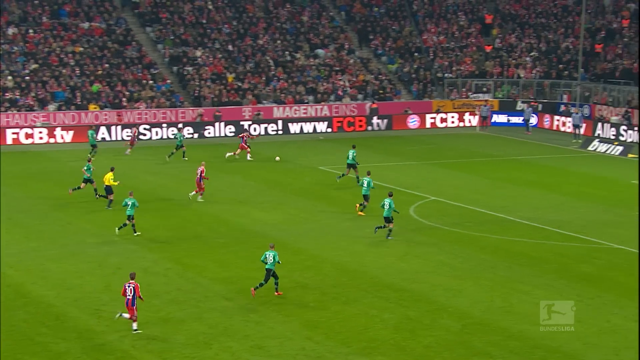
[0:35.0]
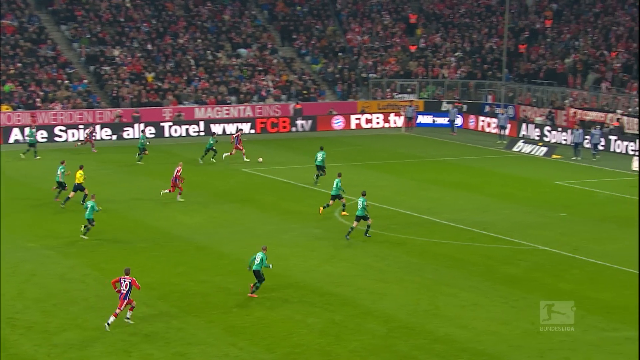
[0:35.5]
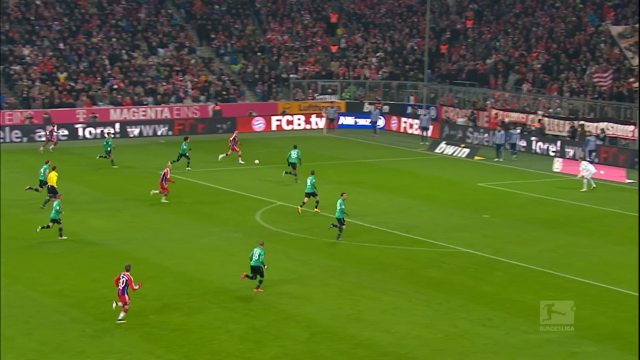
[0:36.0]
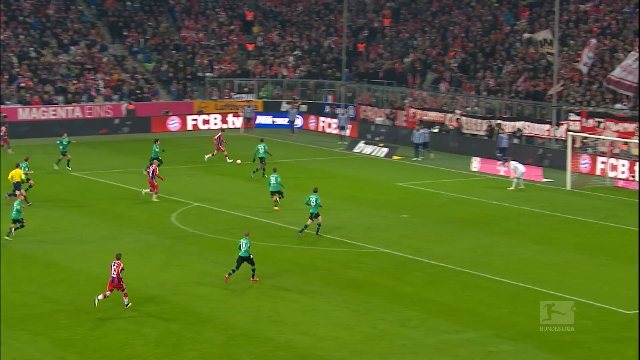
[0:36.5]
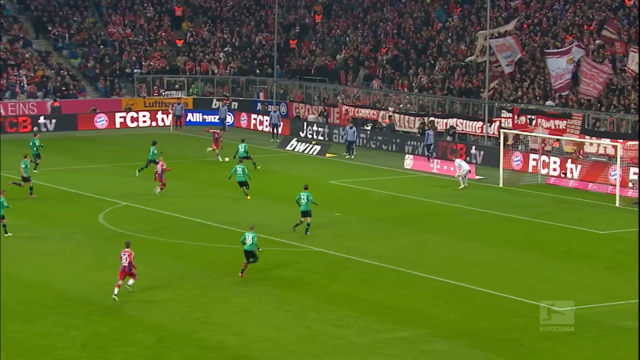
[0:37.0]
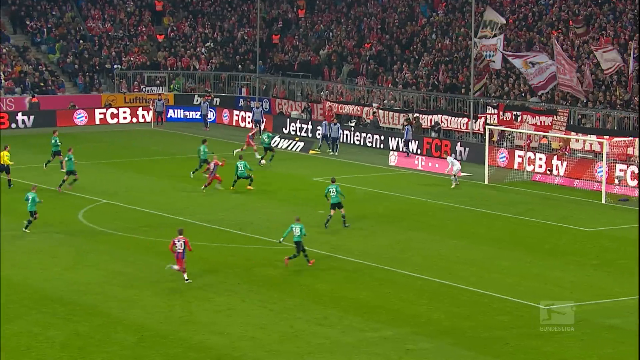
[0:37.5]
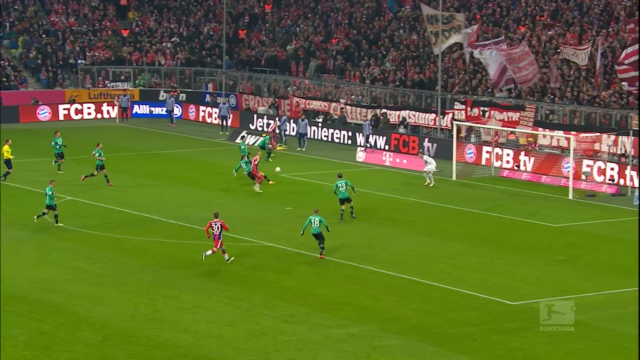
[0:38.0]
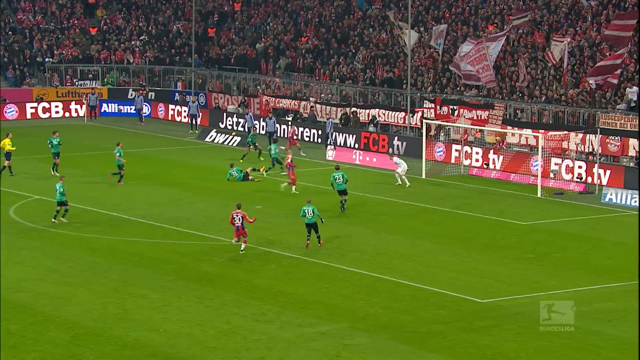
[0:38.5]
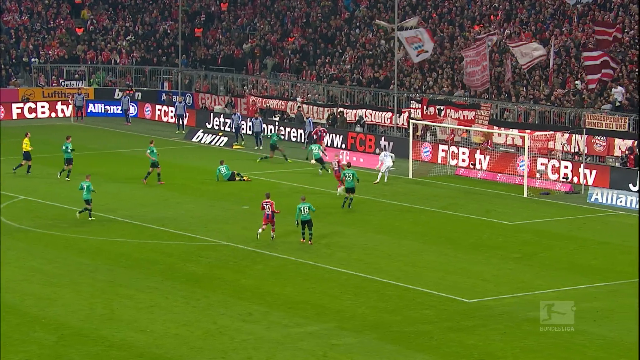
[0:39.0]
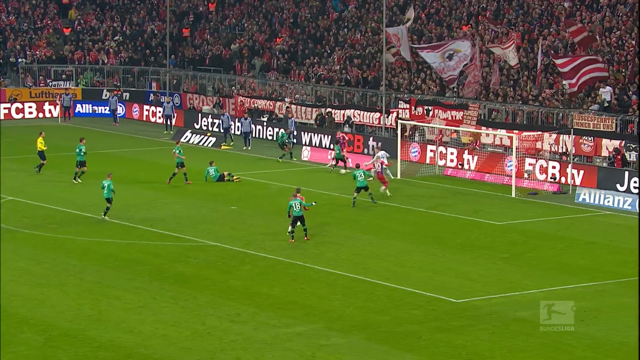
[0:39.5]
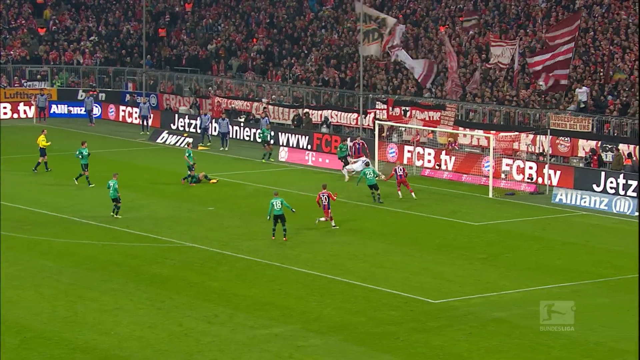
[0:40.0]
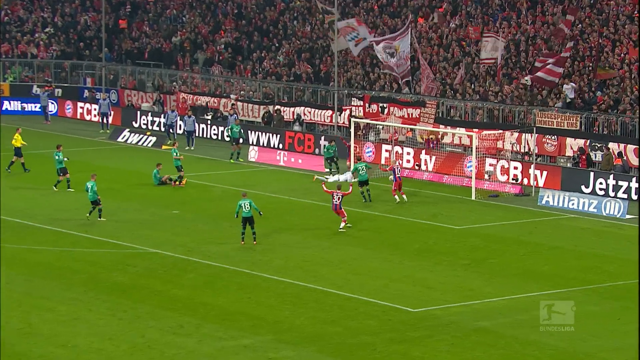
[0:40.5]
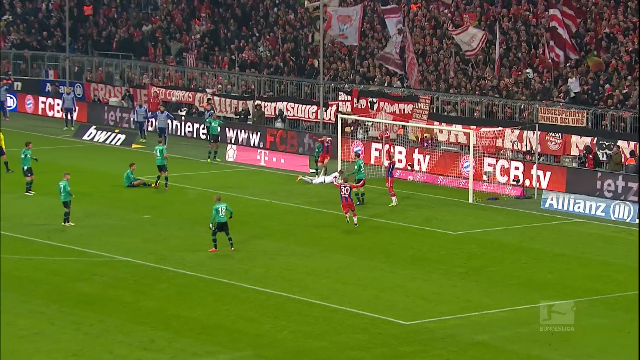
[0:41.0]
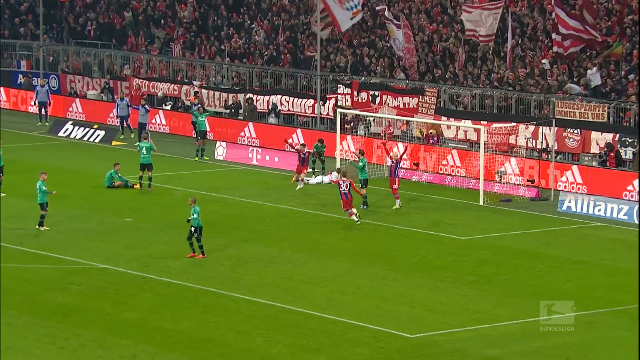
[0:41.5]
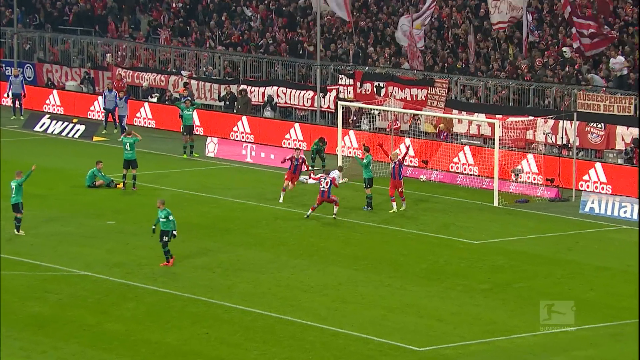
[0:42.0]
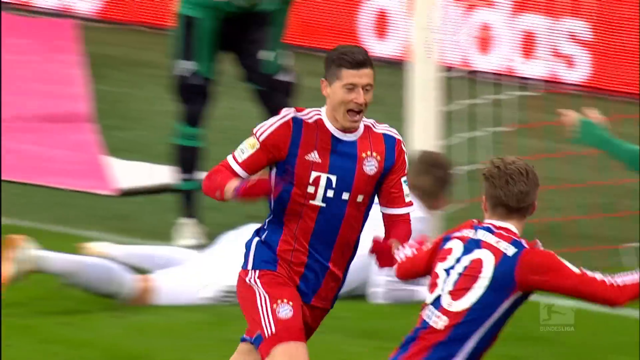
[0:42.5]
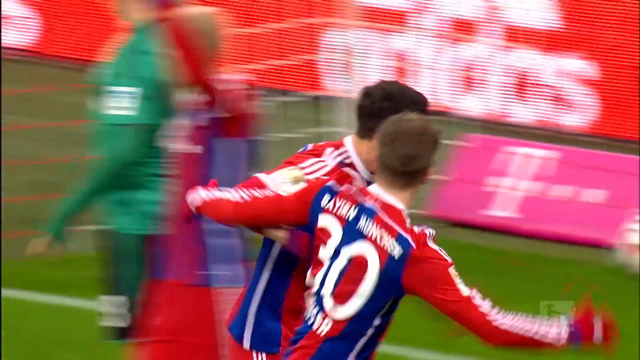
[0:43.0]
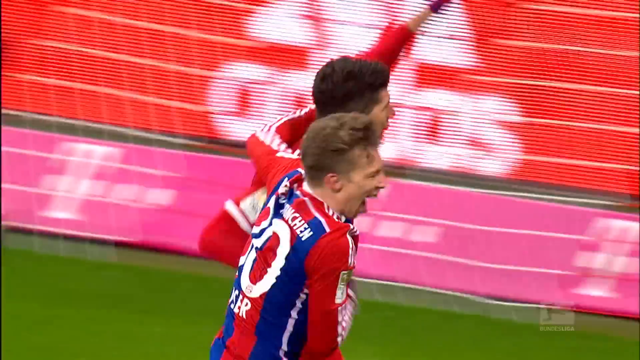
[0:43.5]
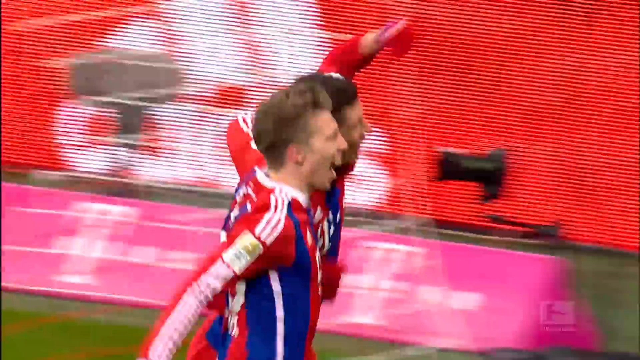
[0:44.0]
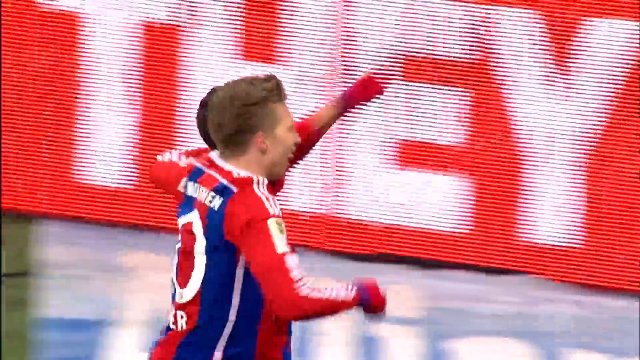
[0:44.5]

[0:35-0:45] Players are playing soccer on the field, and "sub now" appears in the bottom right of the screen. The large stadium has seating on all visible sides, and at its right end fans wave very large, oversized banners or flags in celebration. One team wears green tops and black shorts; the other wears red shirts and red shorts. Someone appears to have scored a goal, and the team in red celebrates. A close-up shows players in red whose tops have some blue markings; they appear to walk along together celebrating and run in an animated manner after scoring. They celebrate in front of an advertising section that at one point changes to show adidas all across it; the brightly lit signage reads "CBTV" and then "Adidas".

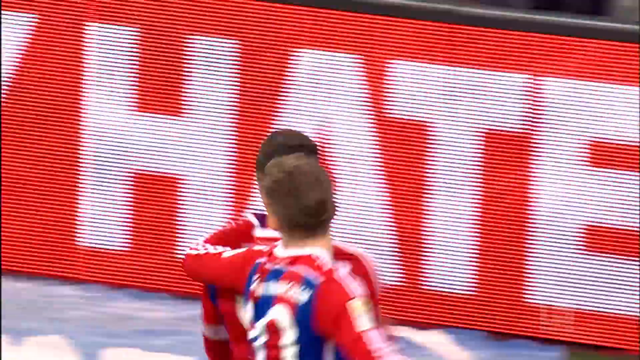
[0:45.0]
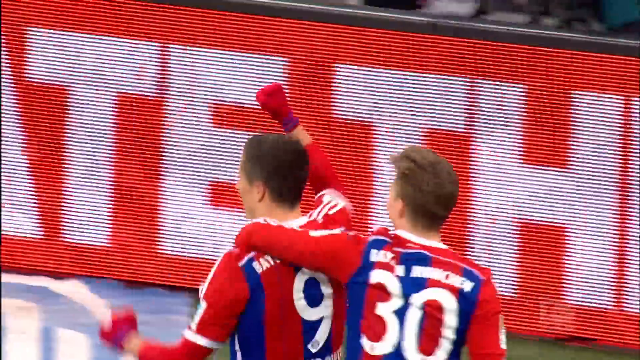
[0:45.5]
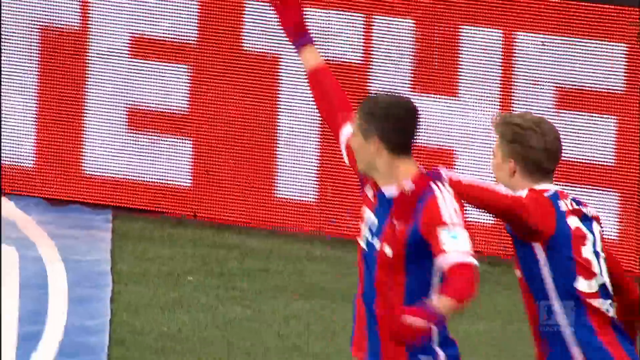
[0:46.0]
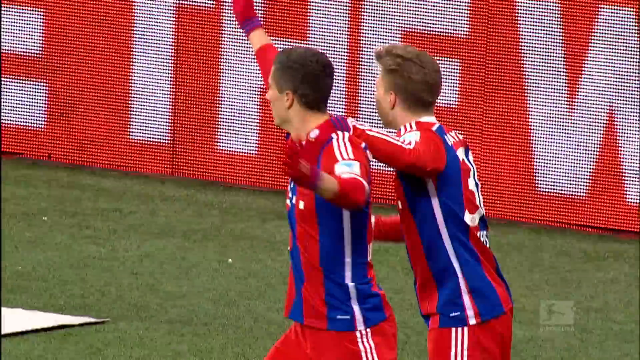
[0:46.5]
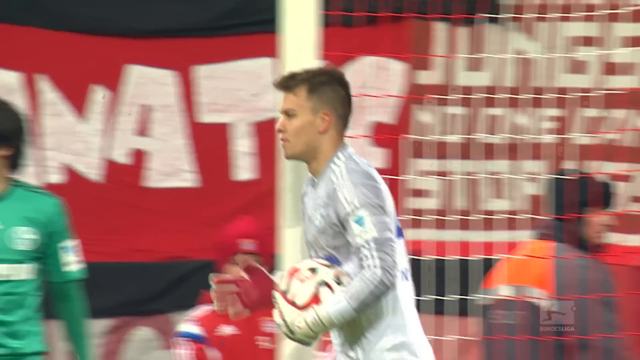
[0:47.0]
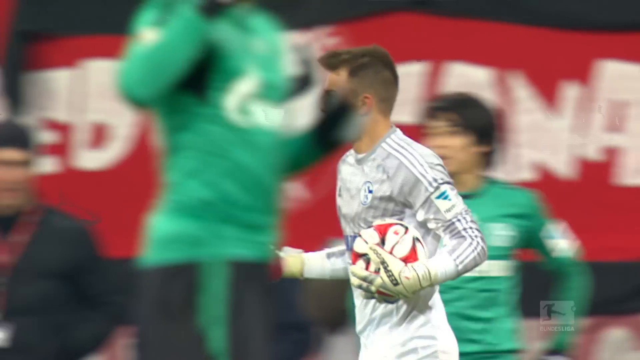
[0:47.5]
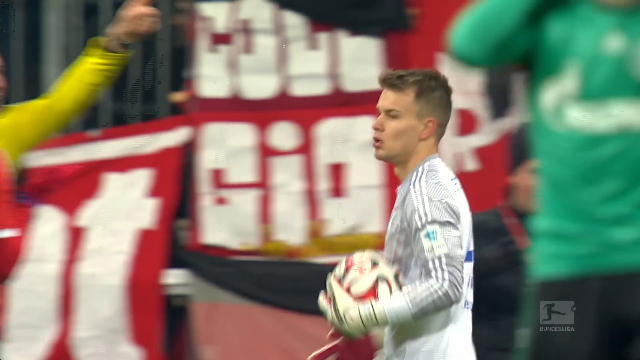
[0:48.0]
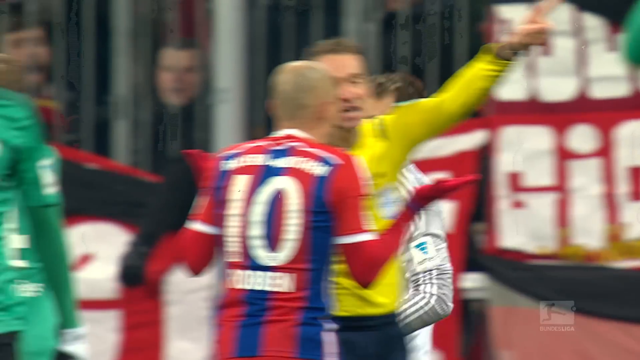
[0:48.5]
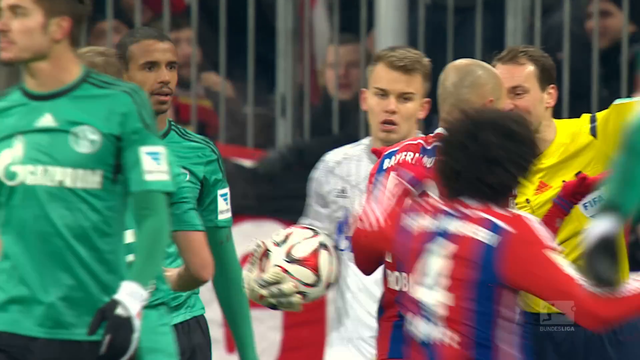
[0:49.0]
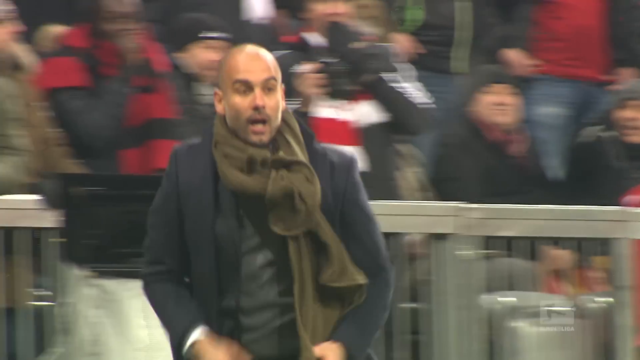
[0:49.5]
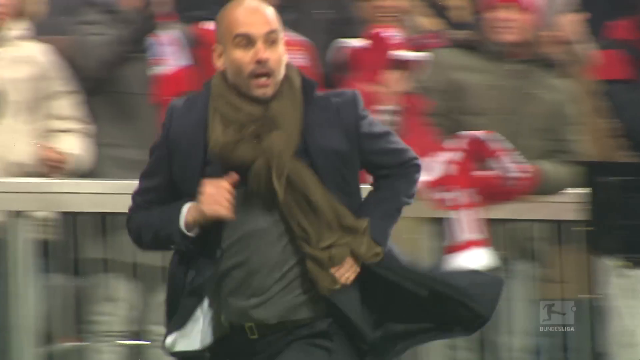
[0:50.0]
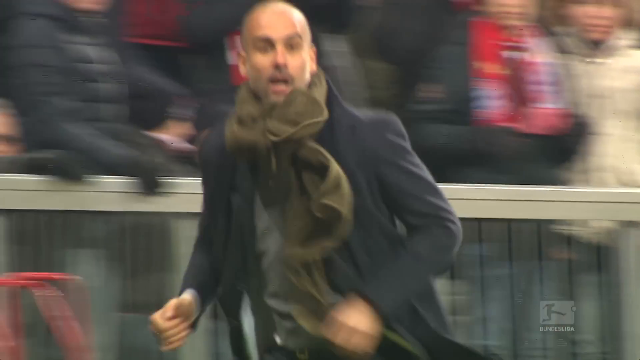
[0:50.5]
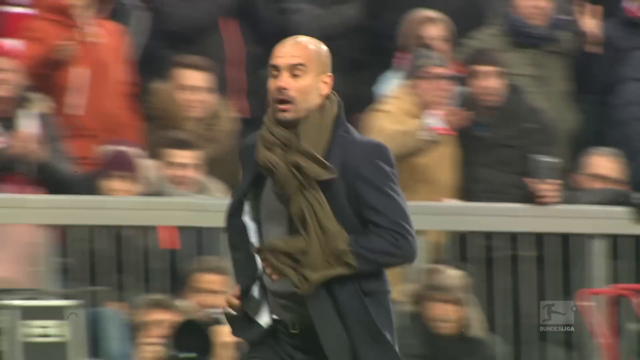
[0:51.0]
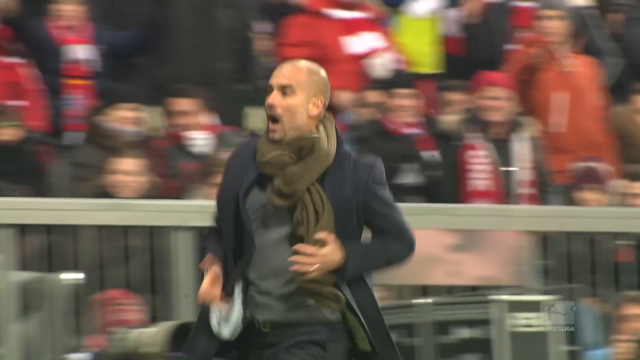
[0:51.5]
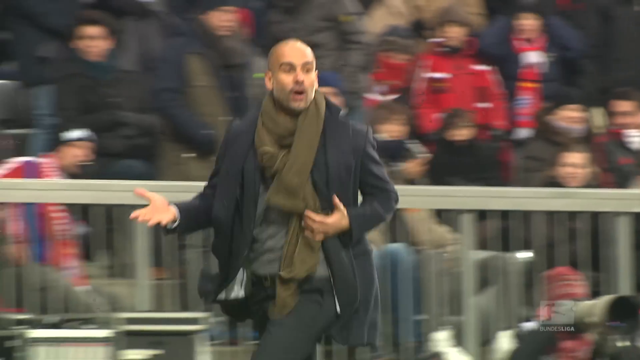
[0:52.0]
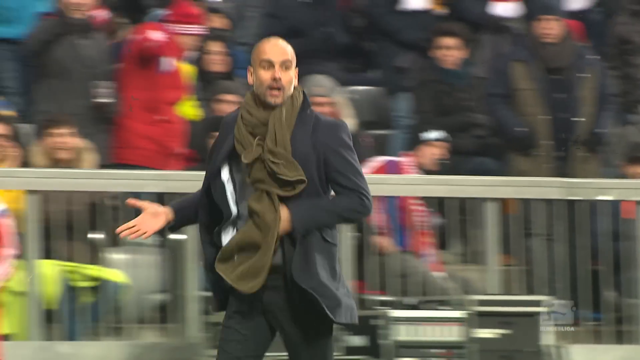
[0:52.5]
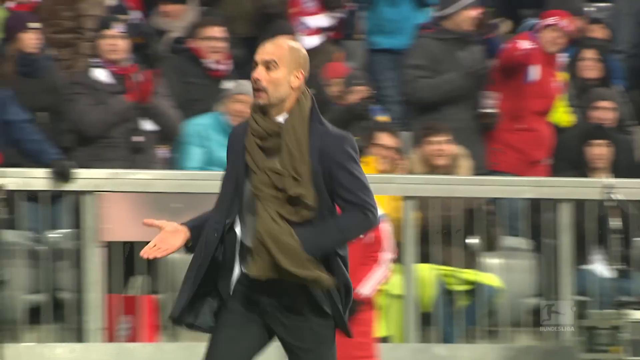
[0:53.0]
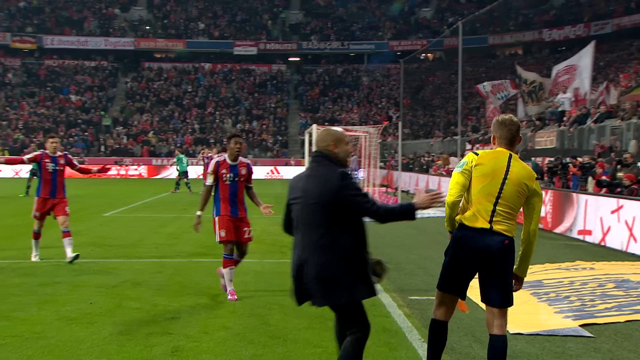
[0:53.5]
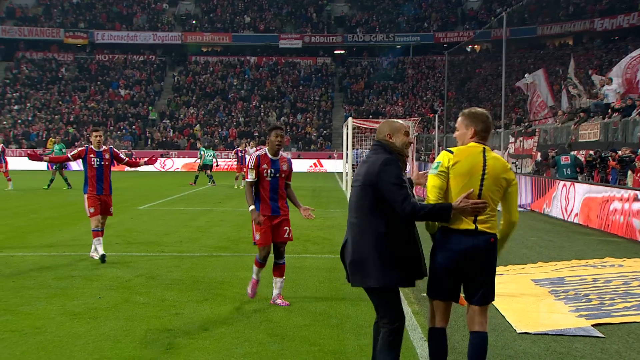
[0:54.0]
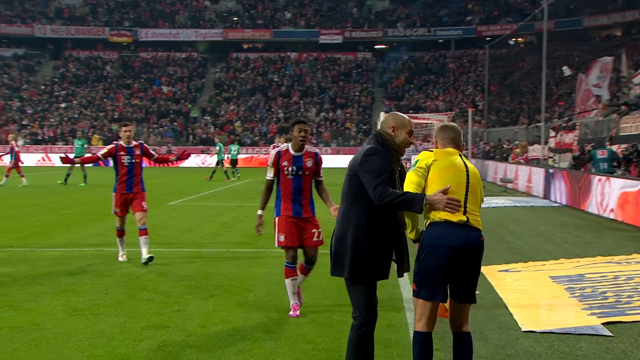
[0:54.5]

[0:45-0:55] Players celebrate. One has the number 9 on the back of his uniform, which is mostly red with blue parts on the top. Player number 30 has his left arm over the shoulder of player number 9. Suddenly someone holding a soccer ball appears, wearing a silver-white top and white shorts, and carries the ball along. The bald man, likely a coach, is seen with his long scarf, which is visible here as olive green. He runs quickly across the field area, hands open and mouth somewhat agape. He then talks to a younger player in a yellow shirt and dark blue pants, seeming to rush to meet him and converse with him on the sidelines.